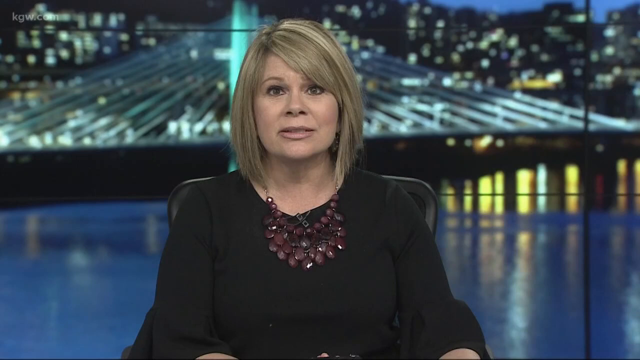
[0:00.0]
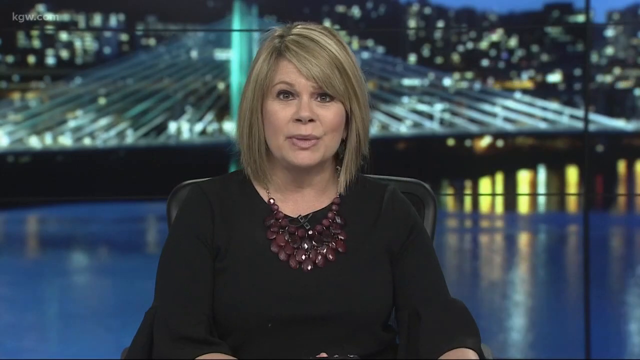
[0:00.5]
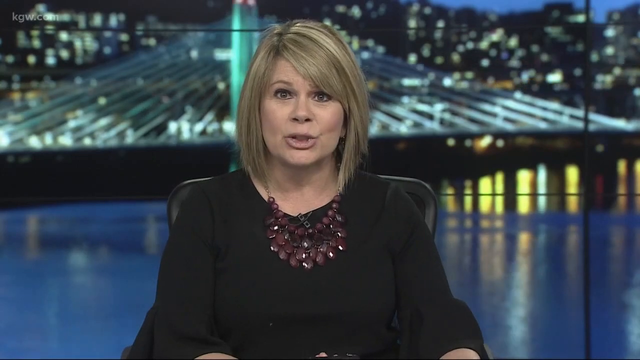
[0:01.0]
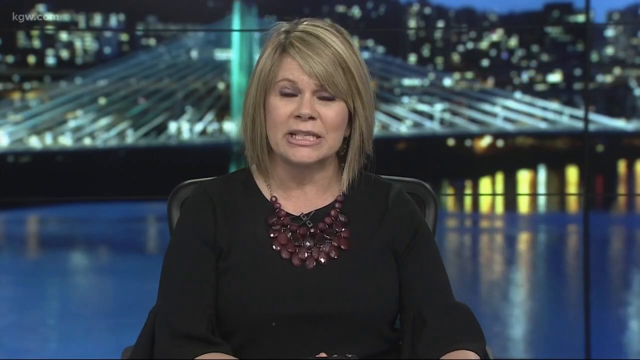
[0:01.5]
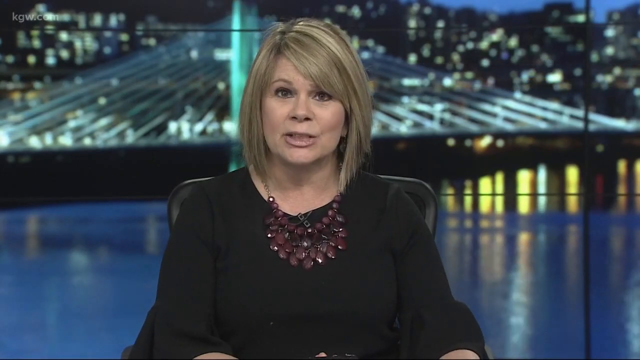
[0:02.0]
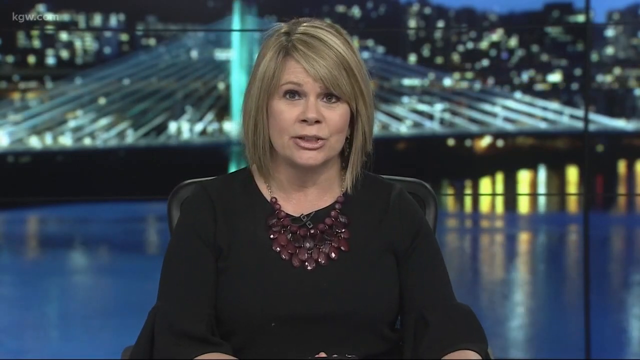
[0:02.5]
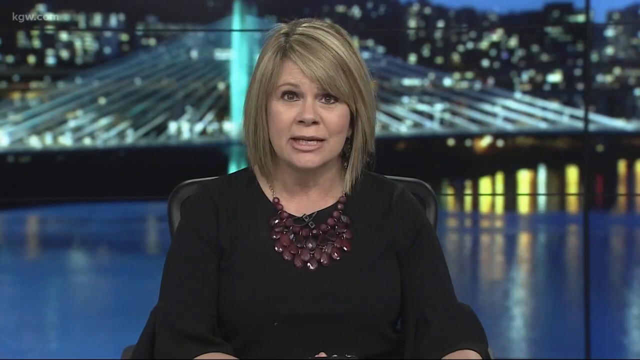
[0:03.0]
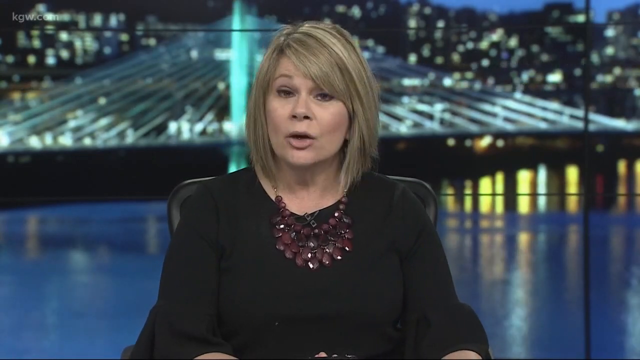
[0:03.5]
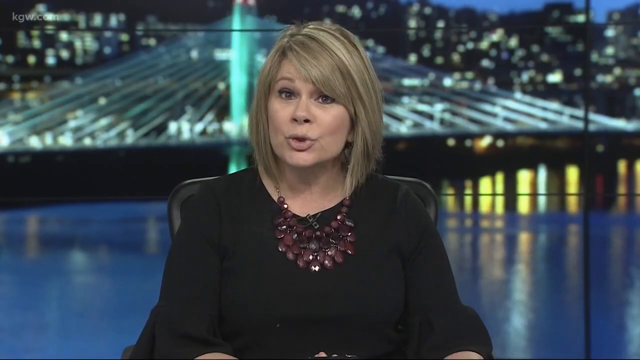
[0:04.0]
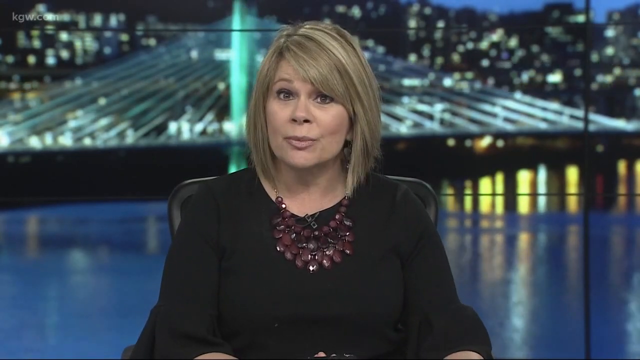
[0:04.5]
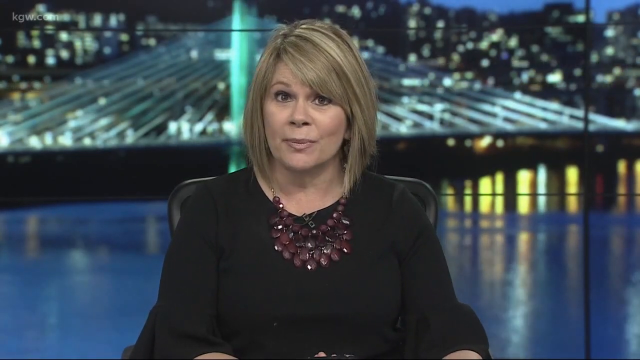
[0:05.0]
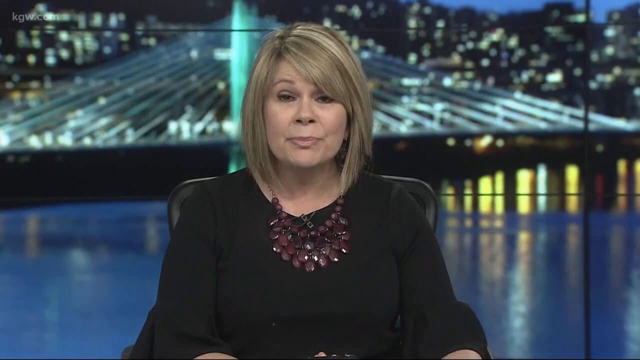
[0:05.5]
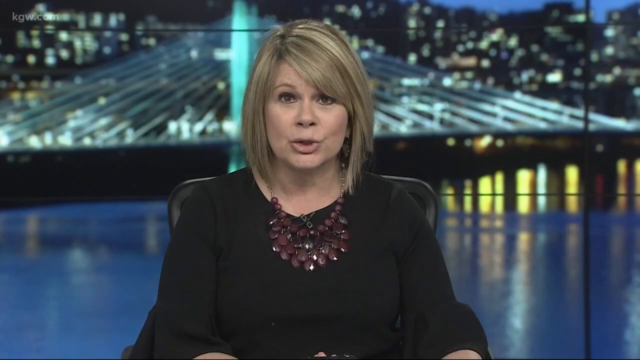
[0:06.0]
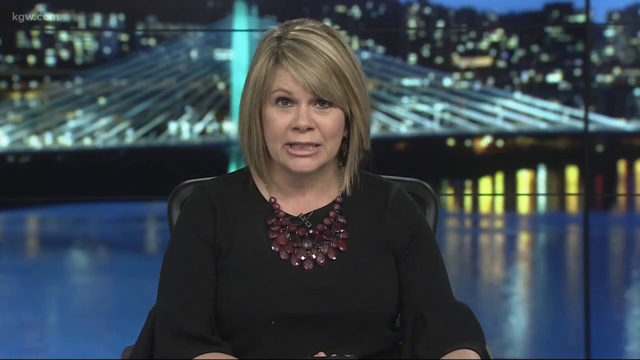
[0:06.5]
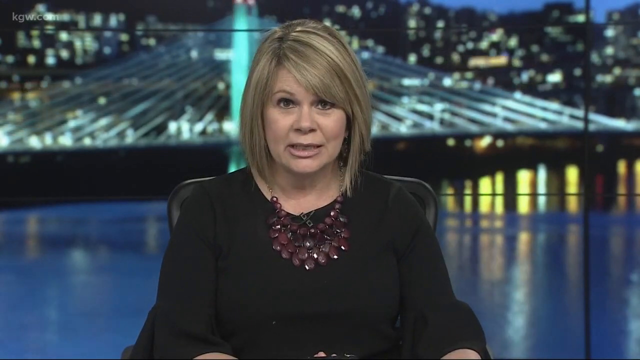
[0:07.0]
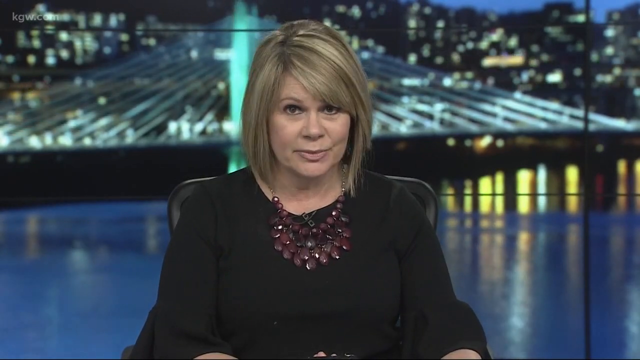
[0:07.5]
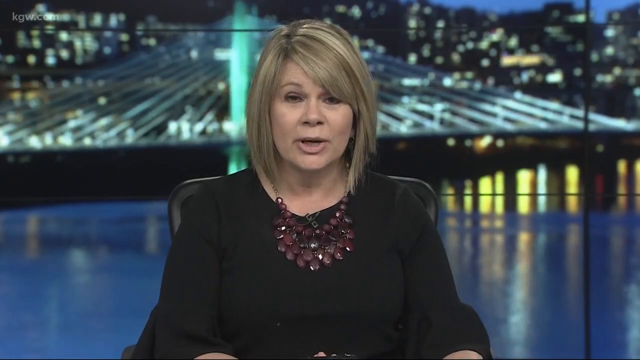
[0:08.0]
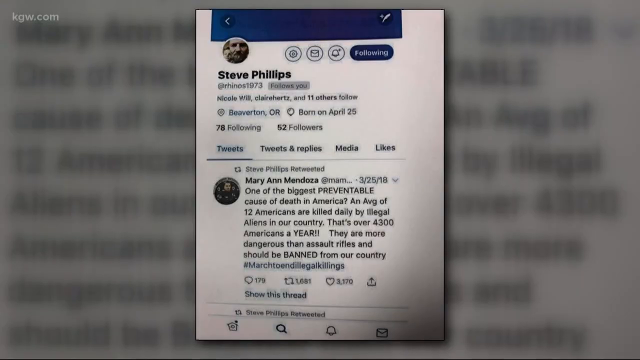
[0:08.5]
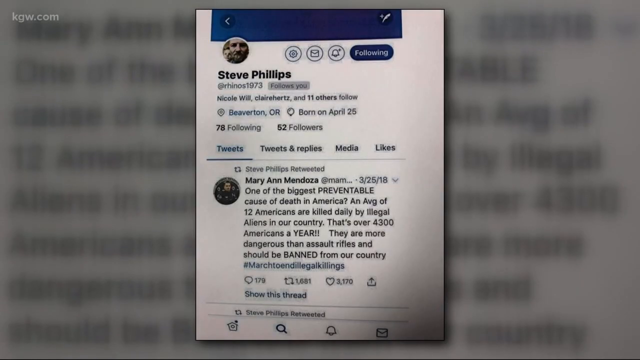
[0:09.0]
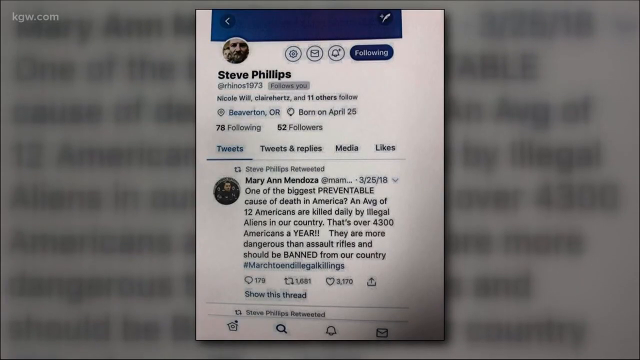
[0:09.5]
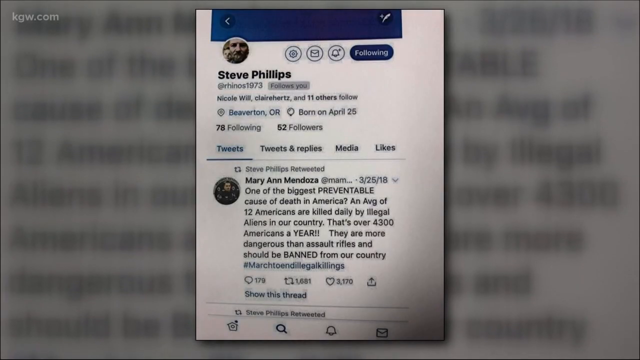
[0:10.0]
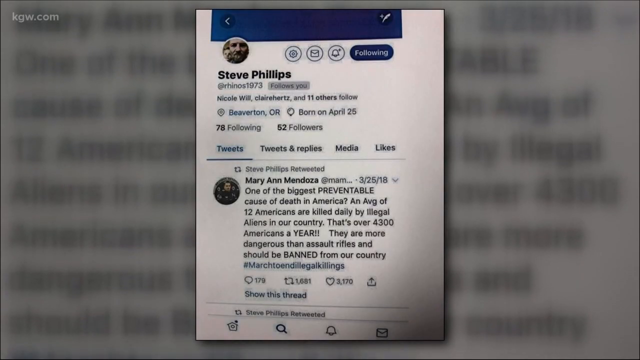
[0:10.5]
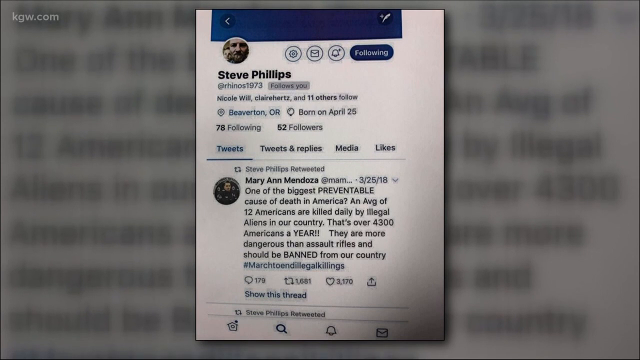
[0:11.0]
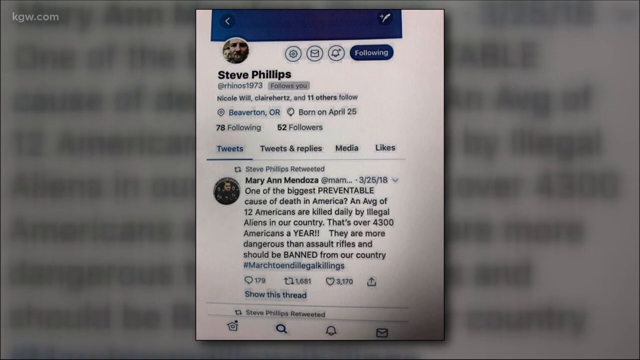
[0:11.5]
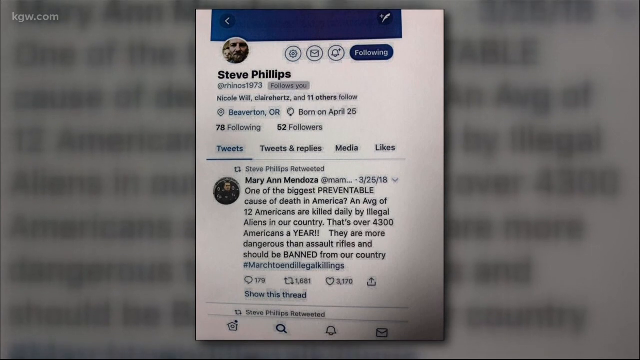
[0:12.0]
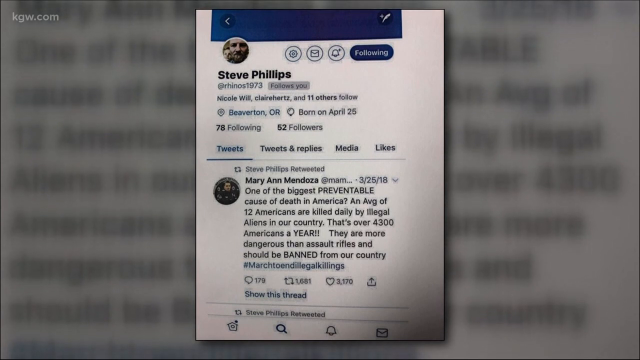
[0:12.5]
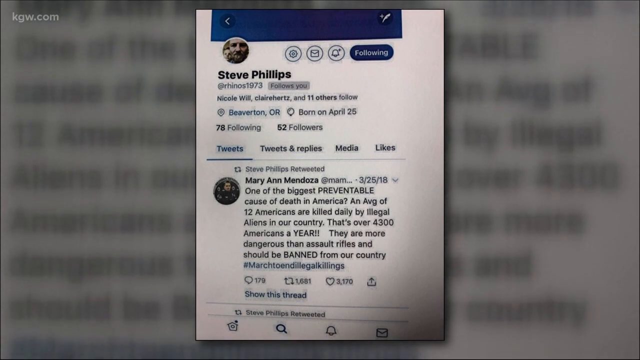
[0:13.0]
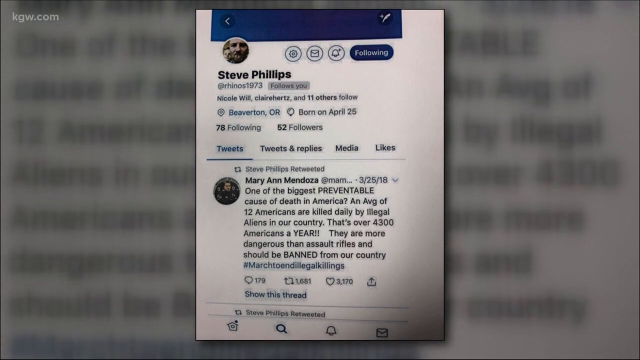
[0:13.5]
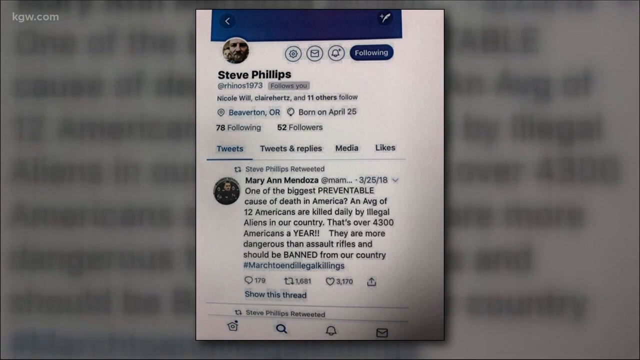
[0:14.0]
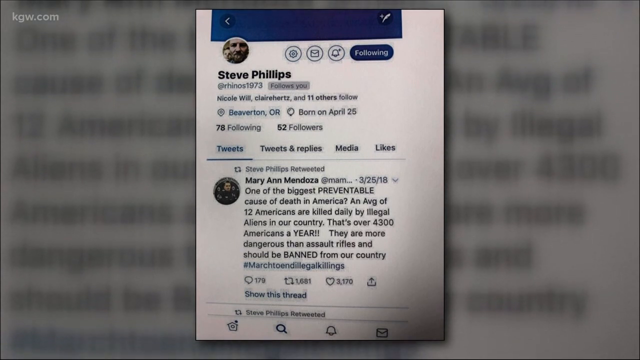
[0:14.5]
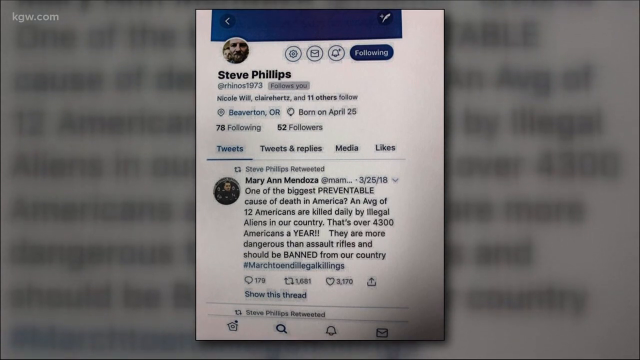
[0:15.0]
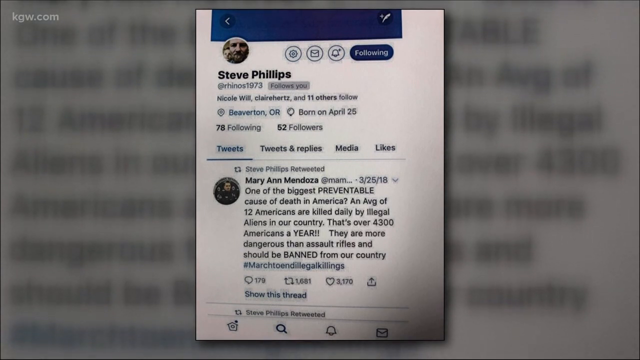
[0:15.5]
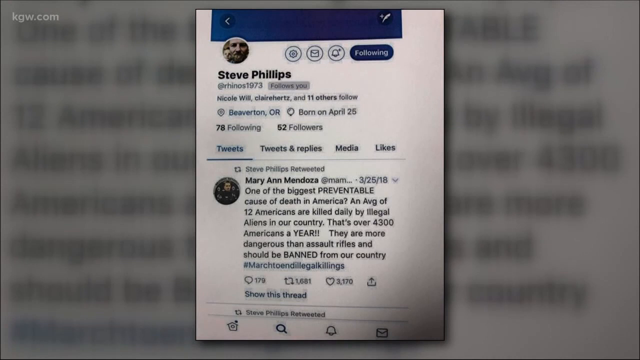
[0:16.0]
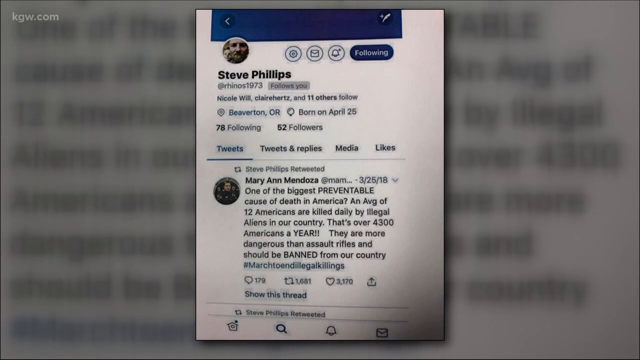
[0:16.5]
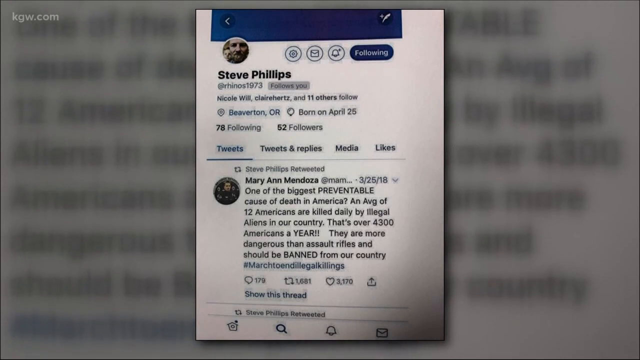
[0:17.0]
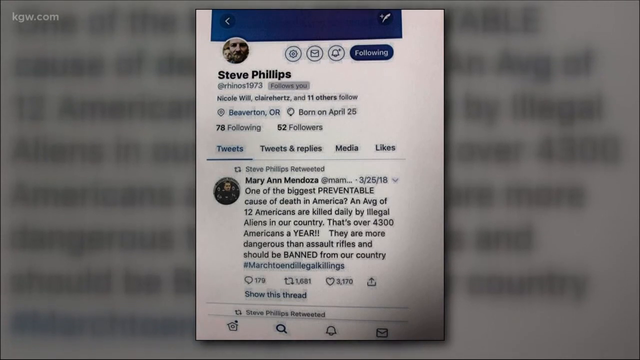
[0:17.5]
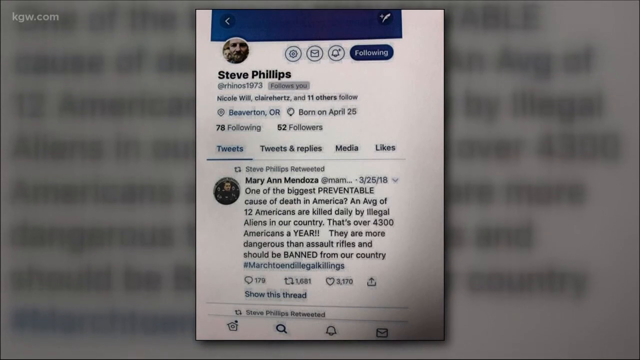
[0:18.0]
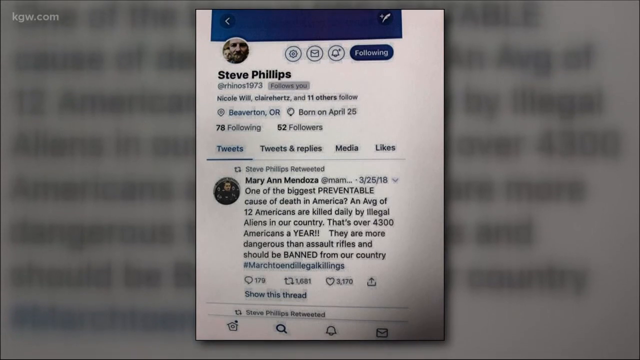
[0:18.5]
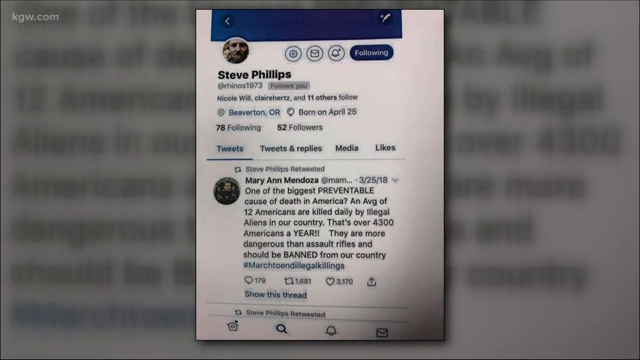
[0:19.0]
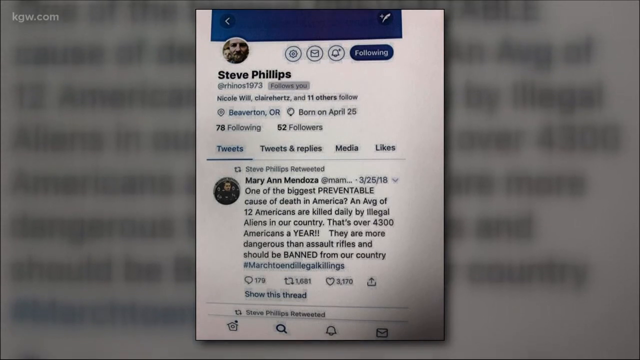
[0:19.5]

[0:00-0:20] A blonde-haired woman with a light complexion sits in front of a cityscape view. She wears a black blouse and a purple necklace; her eyes are brown and her lipstick is pinkish. Behind her are many different buildings, each with lights shining through the windows. In front of the buildings, a bridge crosses a body of water, with cars going up and down the bridge's road. Cables run up to a metal post that is lit up in green. It is a nighttime scene, a live view of the city. The female news reporter talks directly to the camera, reading off information and showing little emotion. The video then cuts to Steve Phillips, his Twitter account and a retweet he made.